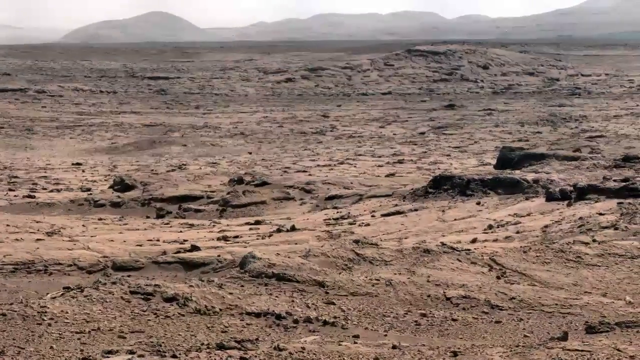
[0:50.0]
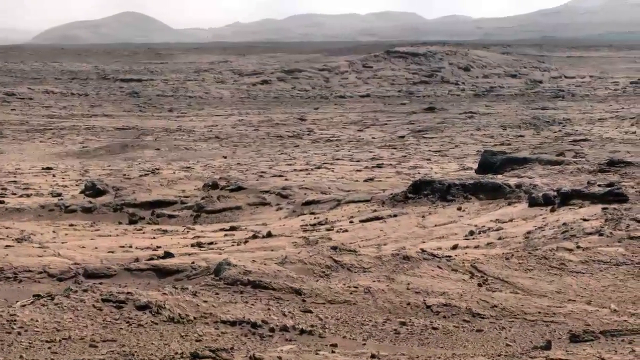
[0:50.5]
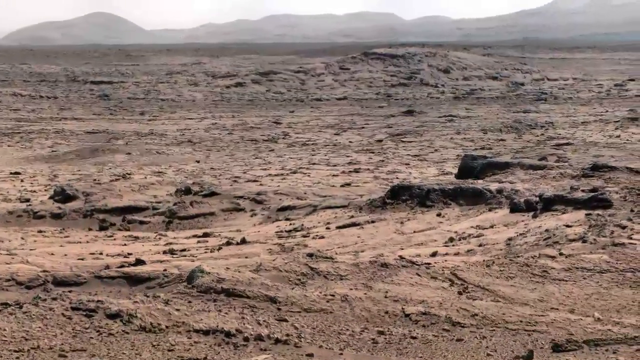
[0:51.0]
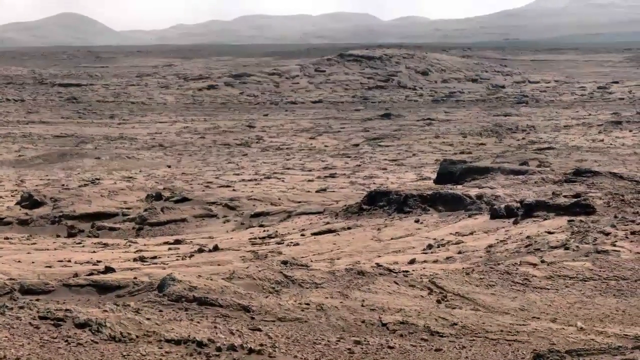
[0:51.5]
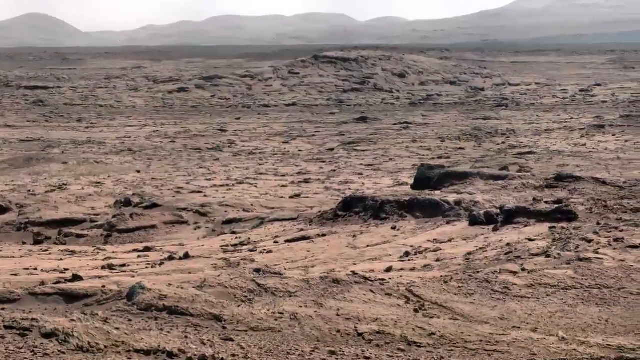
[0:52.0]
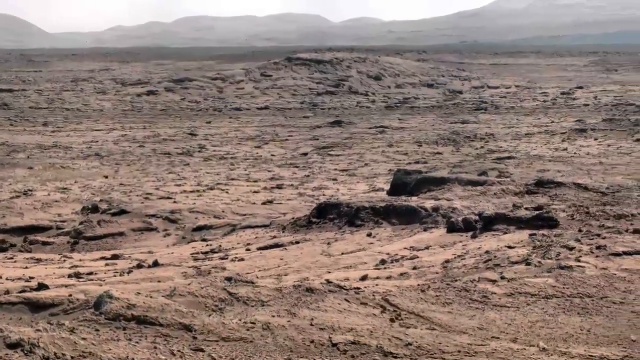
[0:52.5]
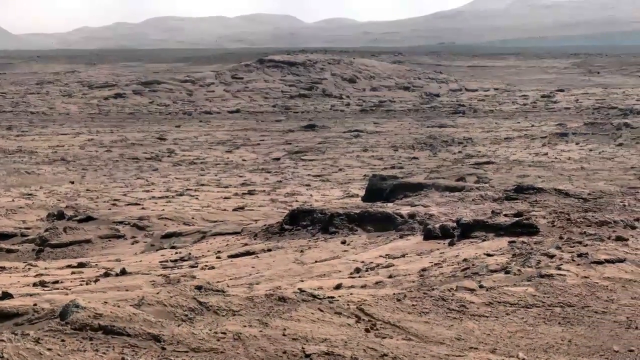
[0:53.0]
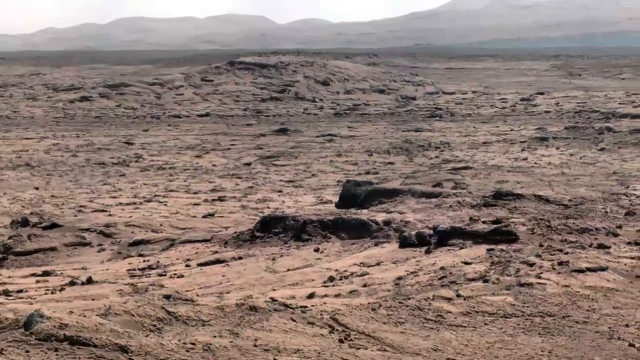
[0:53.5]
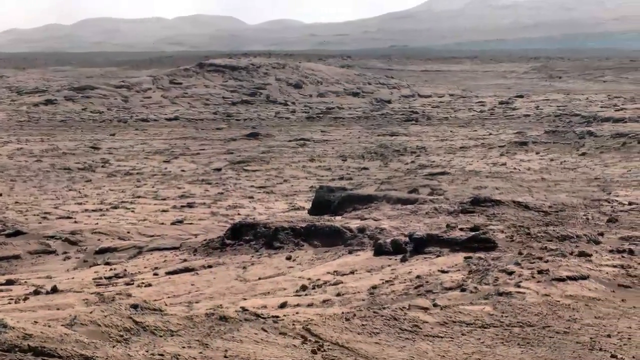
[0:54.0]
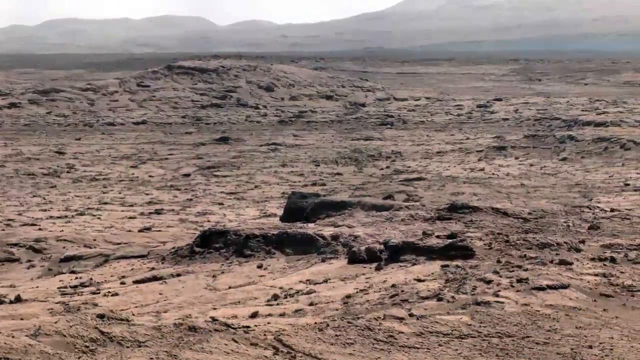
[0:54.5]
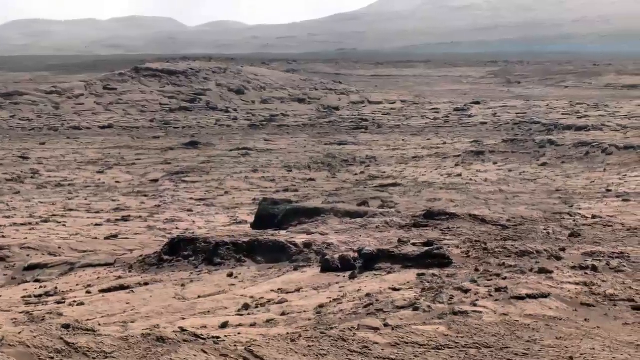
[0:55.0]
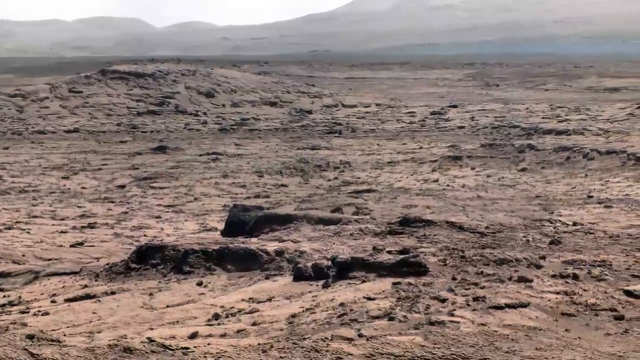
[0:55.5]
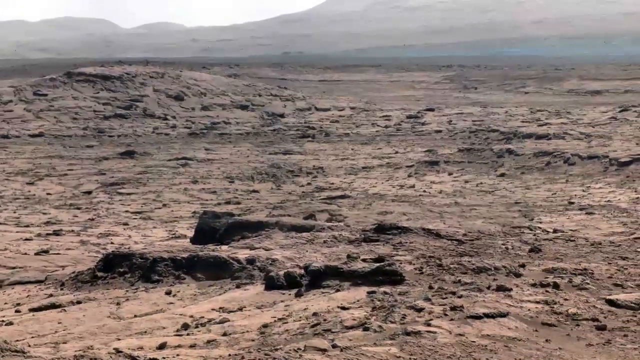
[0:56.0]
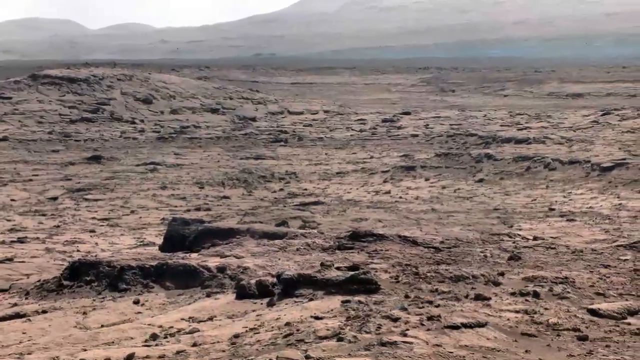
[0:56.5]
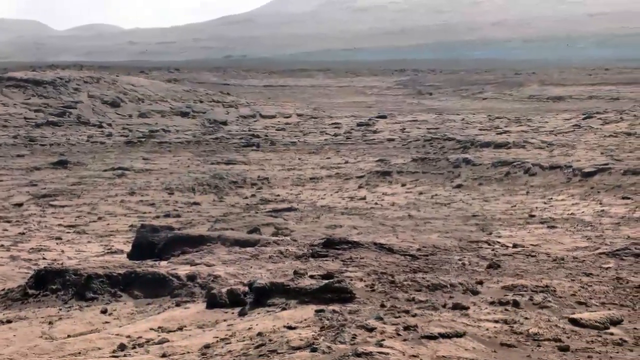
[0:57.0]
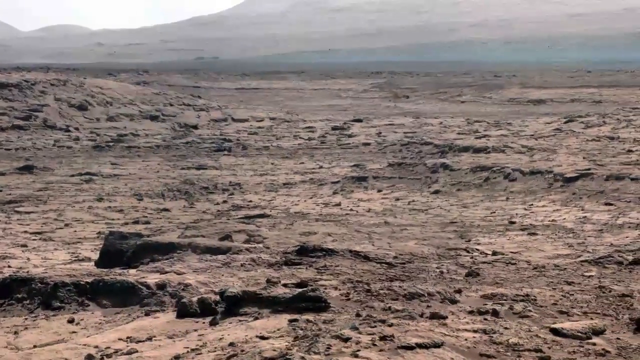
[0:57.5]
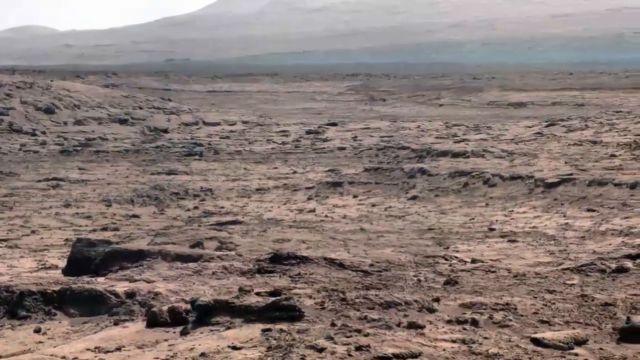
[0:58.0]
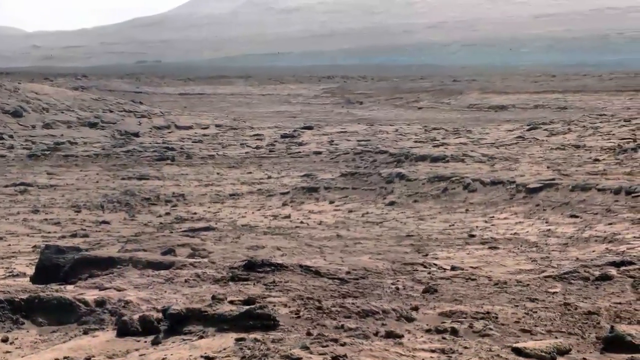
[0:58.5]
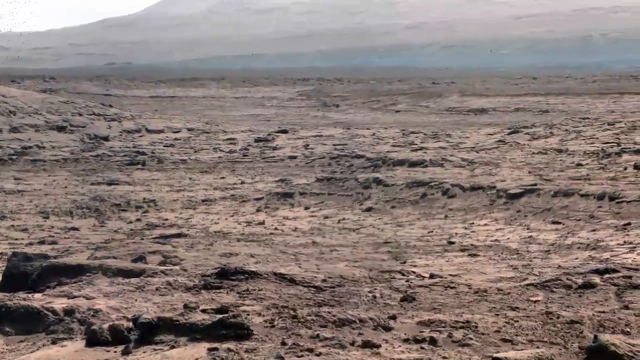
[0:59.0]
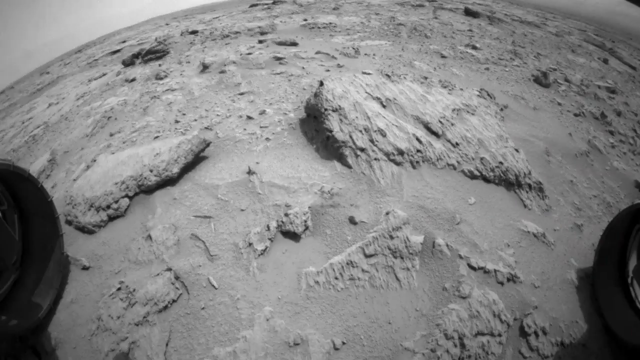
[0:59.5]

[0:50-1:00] The surface of Mars is shown. It apparently has many small holes everywhere and seems to be a desert or something like it. The soil is slightly orange.